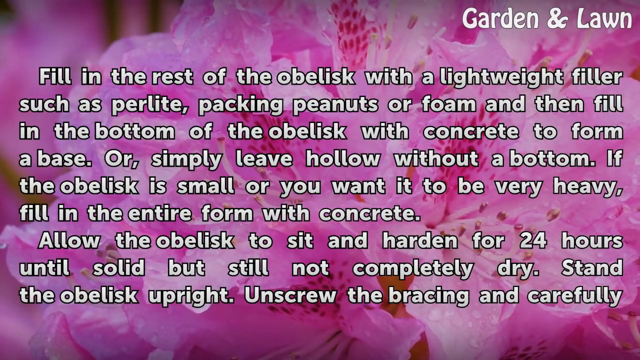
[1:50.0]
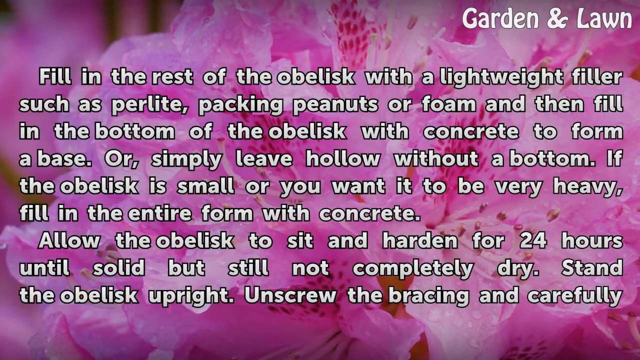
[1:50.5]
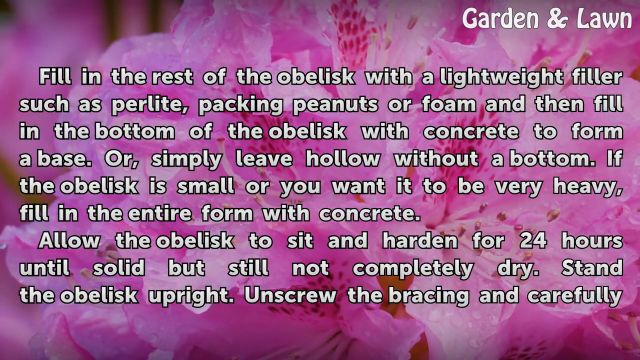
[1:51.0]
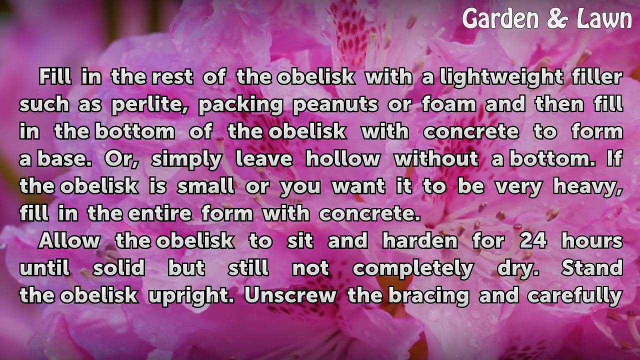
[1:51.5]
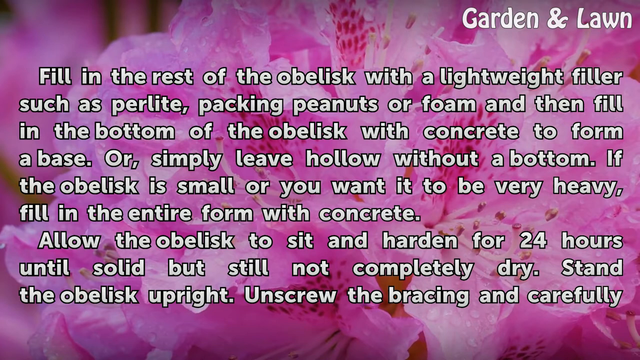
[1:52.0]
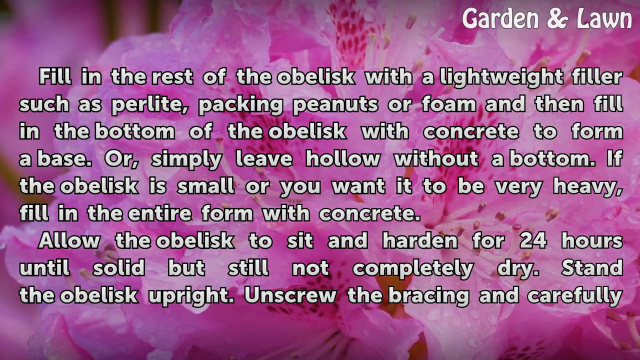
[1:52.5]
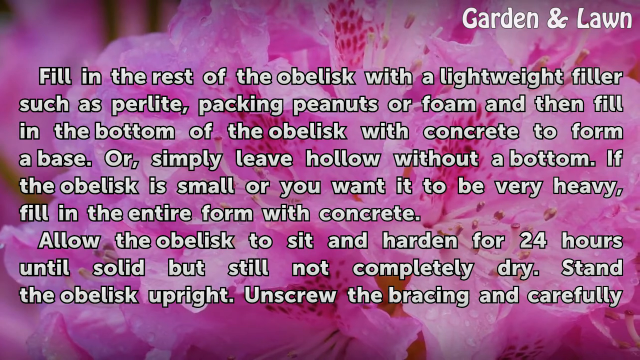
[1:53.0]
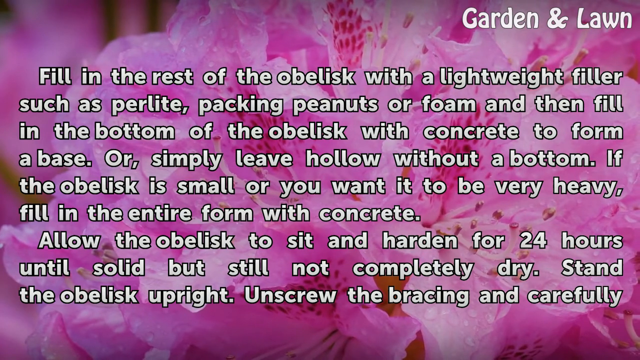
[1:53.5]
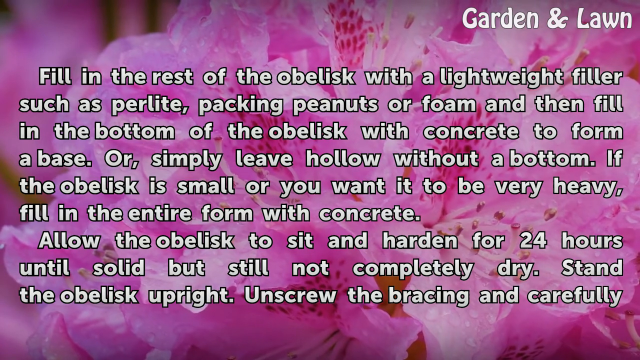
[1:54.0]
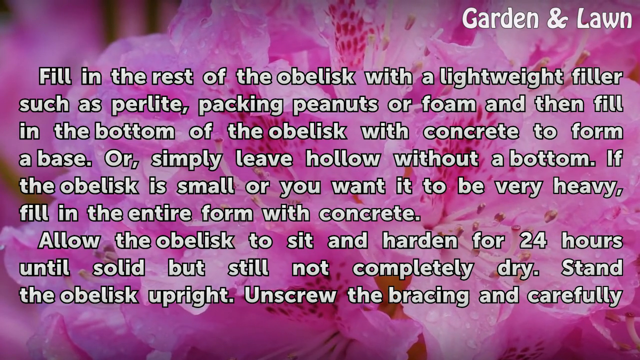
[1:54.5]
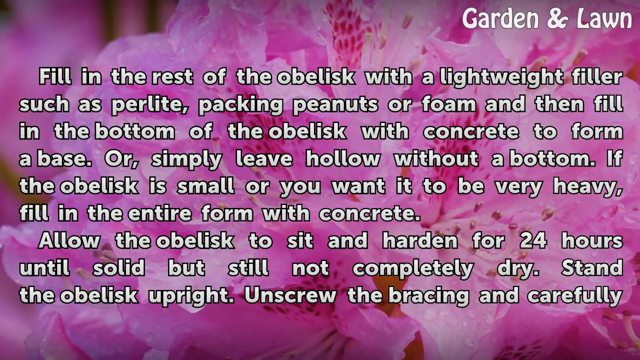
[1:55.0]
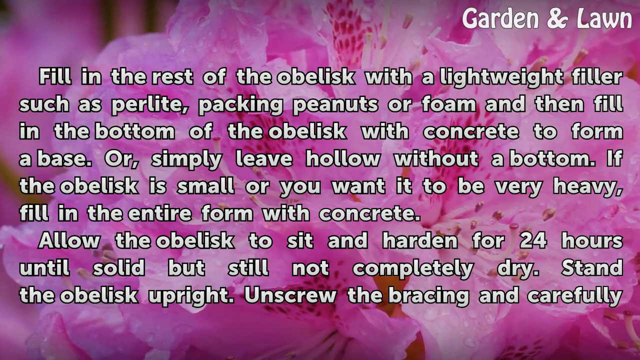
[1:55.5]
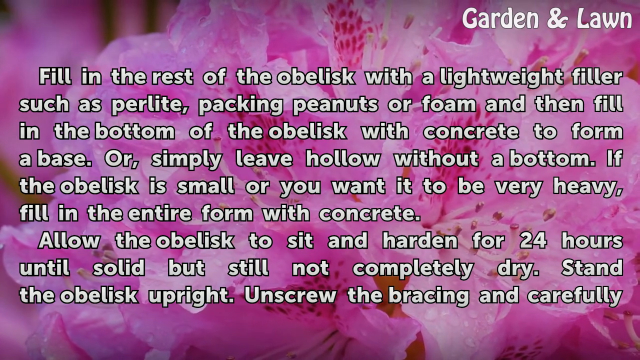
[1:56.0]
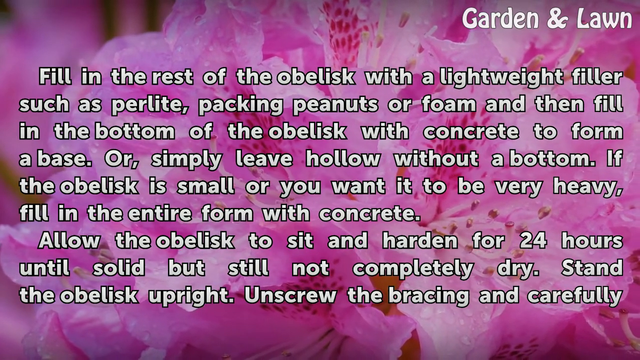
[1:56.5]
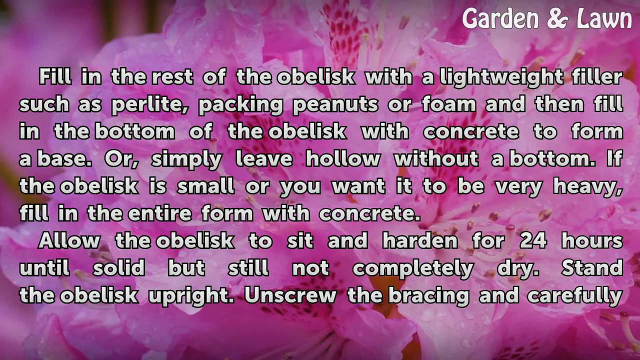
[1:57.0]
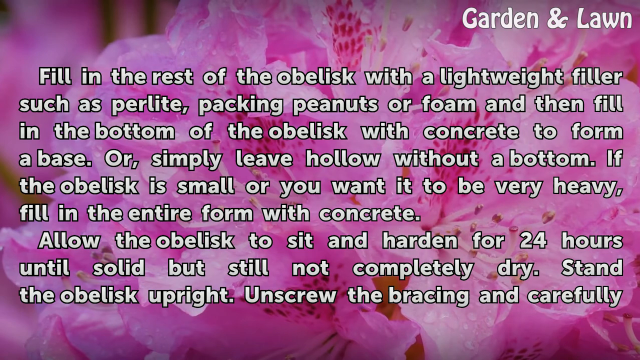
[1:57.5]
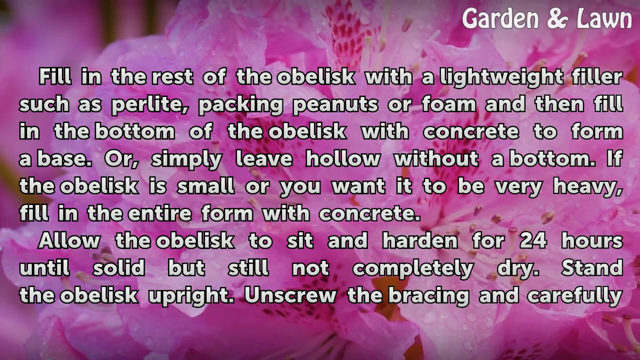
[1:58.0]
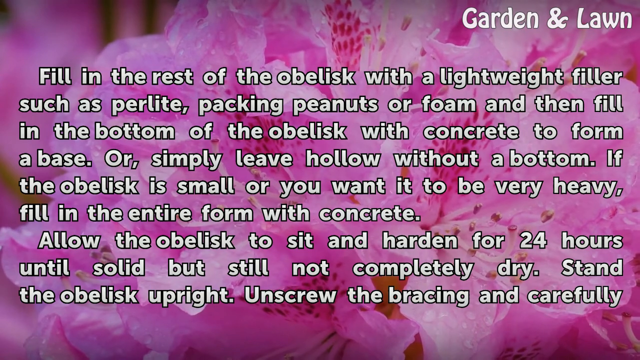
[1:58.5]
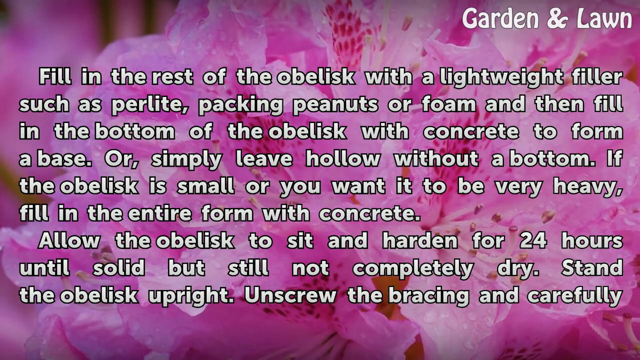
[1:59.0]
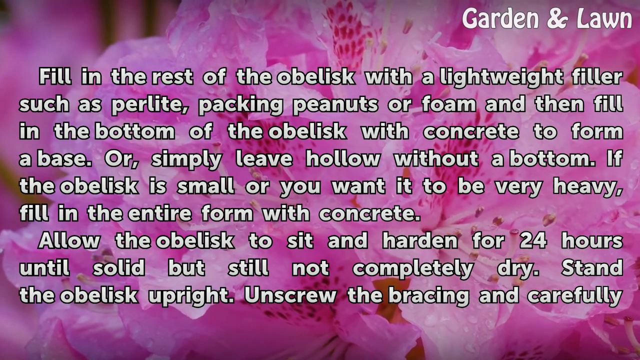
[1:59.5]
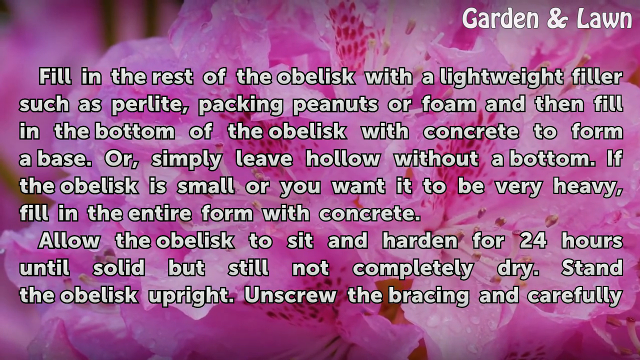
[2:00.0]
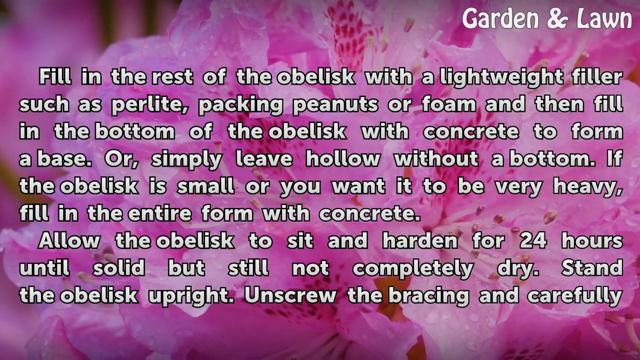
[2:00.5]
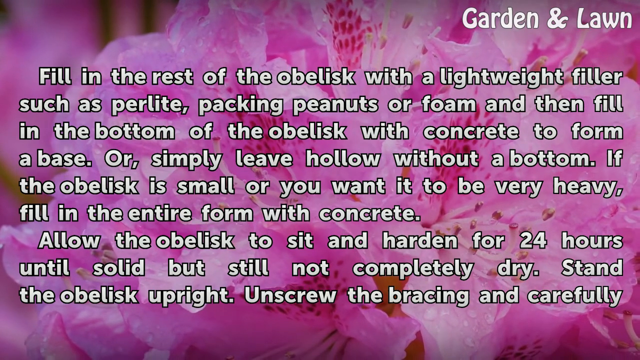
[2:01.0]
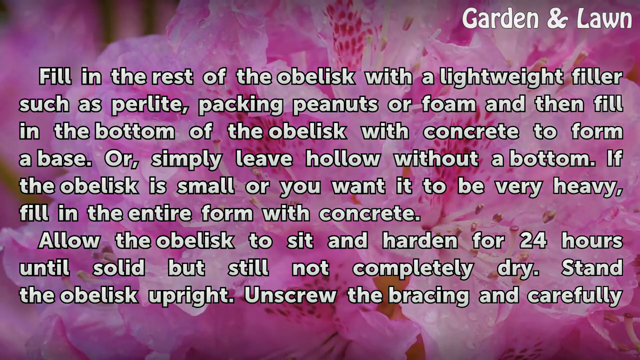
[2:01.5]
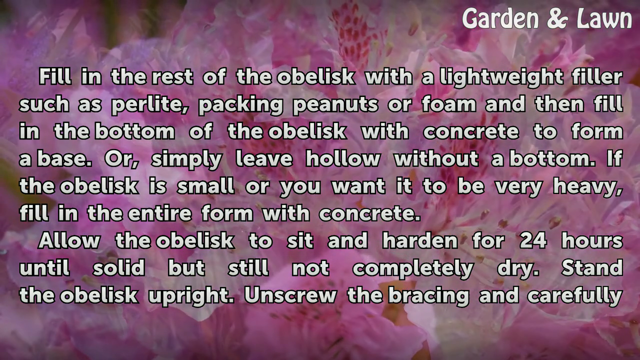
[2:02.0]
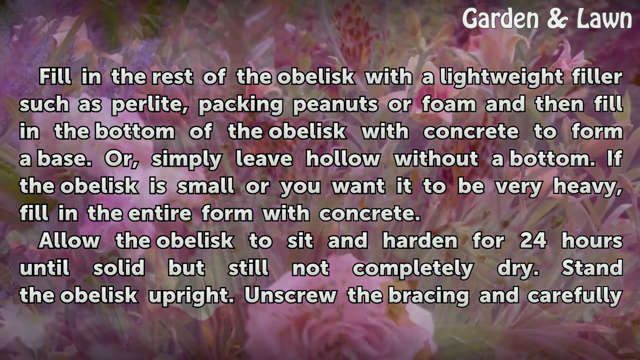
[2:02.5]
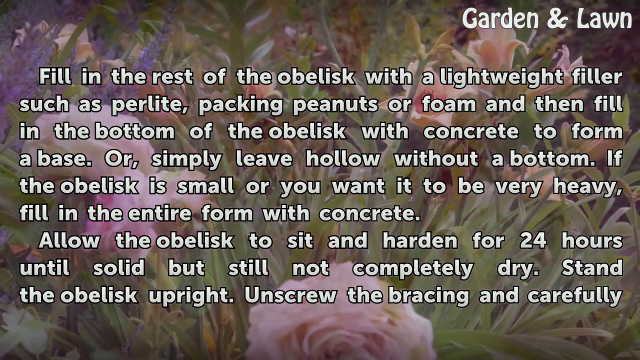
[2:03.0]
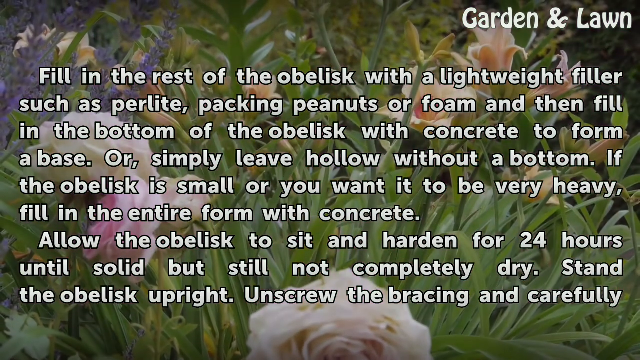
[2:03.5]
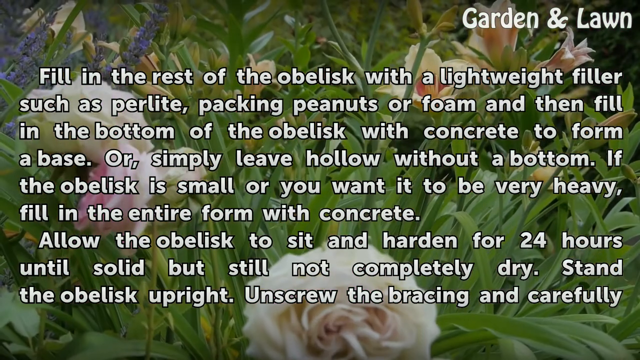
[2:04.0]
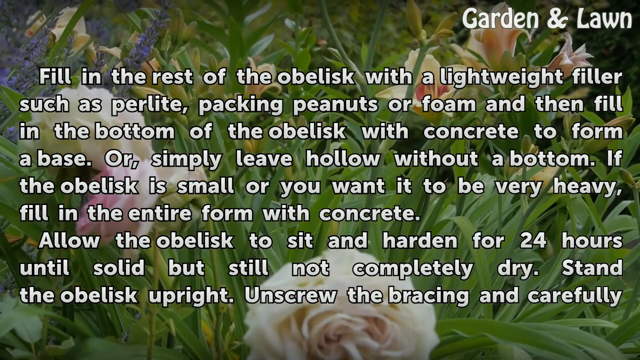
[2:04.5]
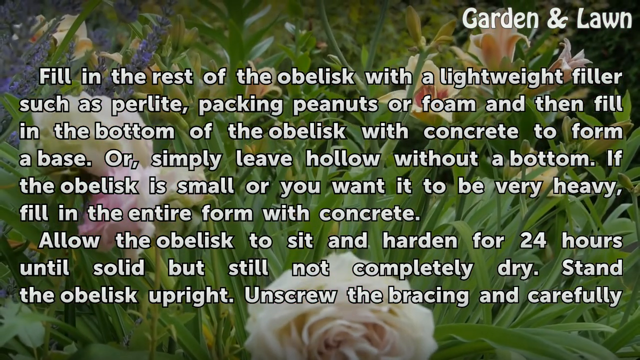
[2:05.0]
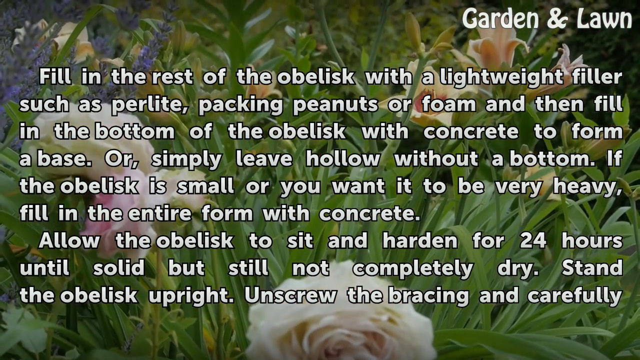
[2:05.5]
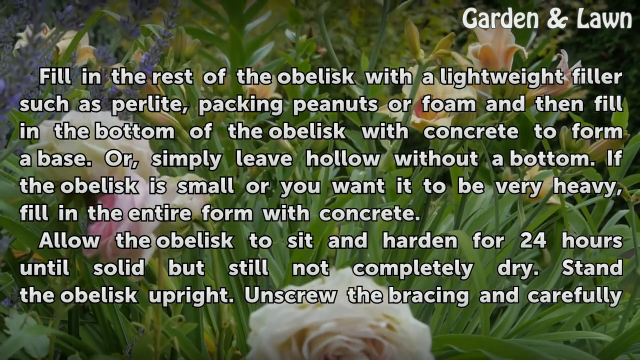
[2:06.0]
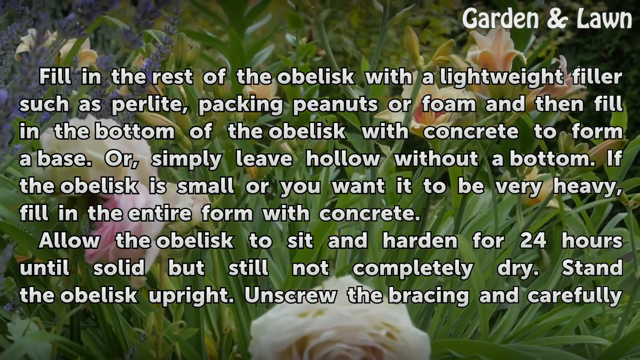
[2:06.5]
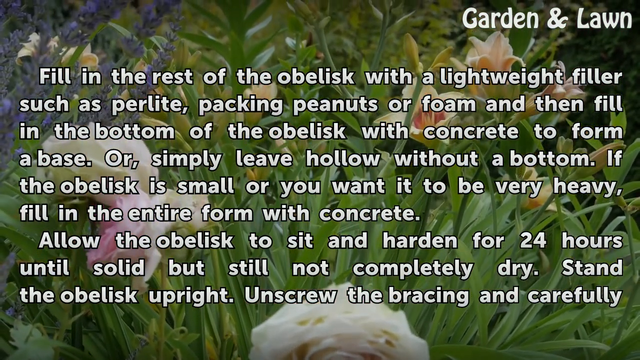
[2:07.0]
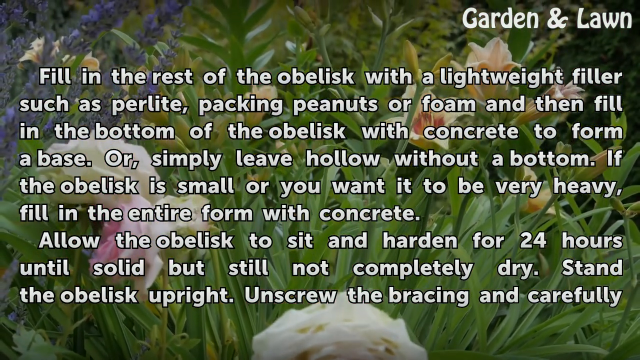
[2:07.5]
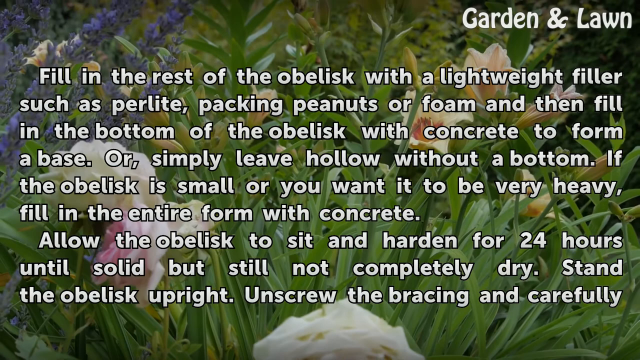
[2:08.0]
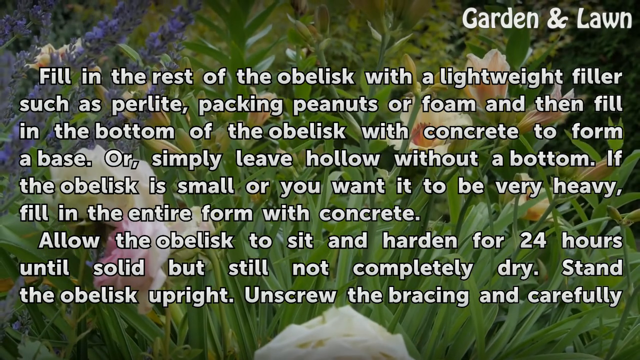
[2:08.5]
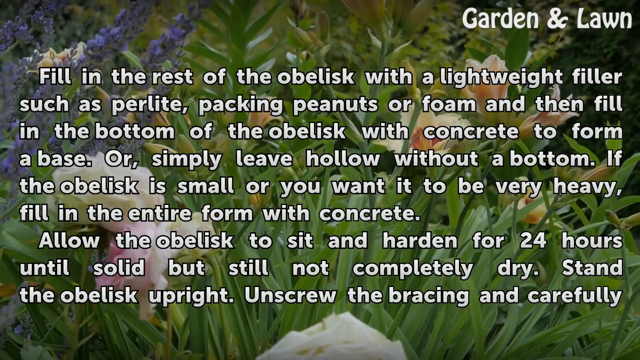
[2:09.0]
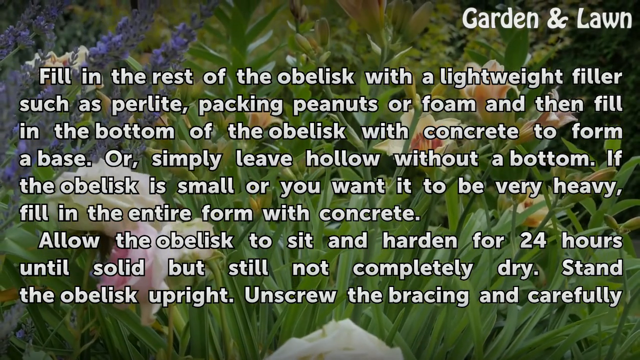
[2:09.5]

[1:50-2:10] The instructions for filling and weighting the obelisk continue. In the upper right corner are the words "Garden & Lawn." The white instruction text reads "Fill in the rest of the obelisk with a lightweight filler such as perlite, packing peanuts or foam, and then fill in the bottom of the obelisk with concrete to form a base. Or, simply leave hollow without a bottom. If the obelisk is small or you want it to be very heavy, fill in the entire form with concrete. Allow the obelisk to sit and harden for 24 hours until solid but still not completely dry. Stand the obelisk upright, unscrew the bracing, and carefully", with "carefully" as the last word. The background transitions from pink flower petals to green foliage, with purple lines of petal plants in the upper left corner and large white-petaled flowers intermixed with the green leaves at the center and lower right of the screen.